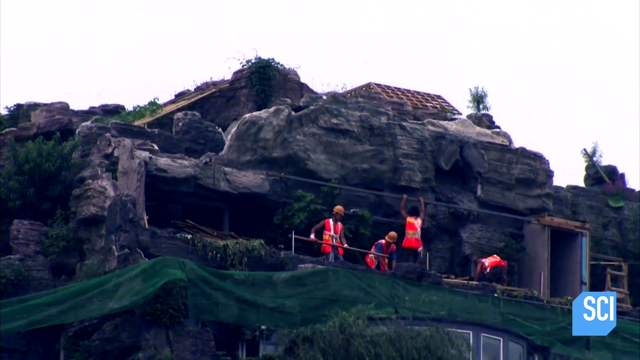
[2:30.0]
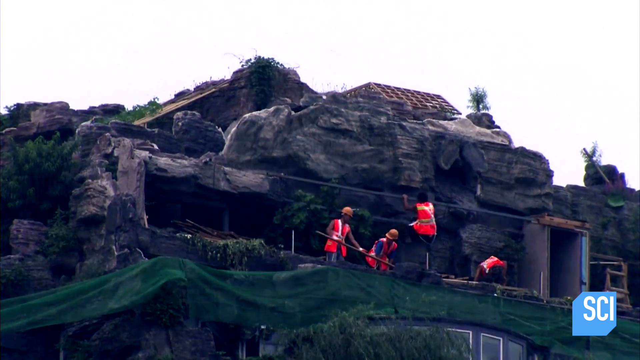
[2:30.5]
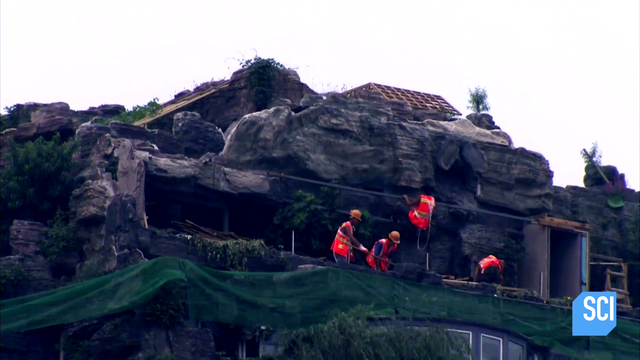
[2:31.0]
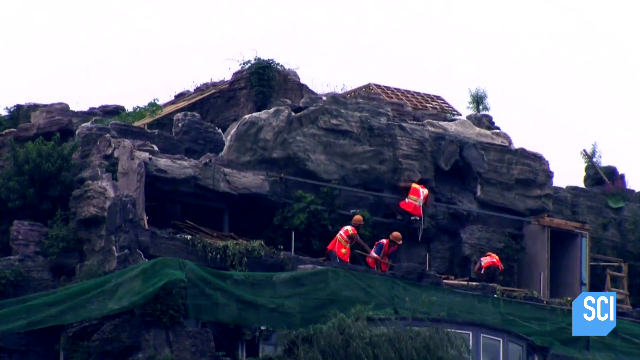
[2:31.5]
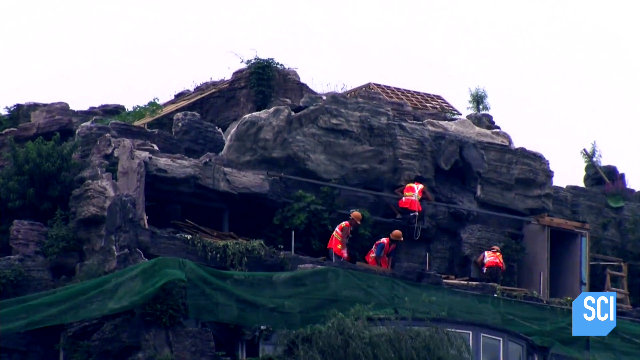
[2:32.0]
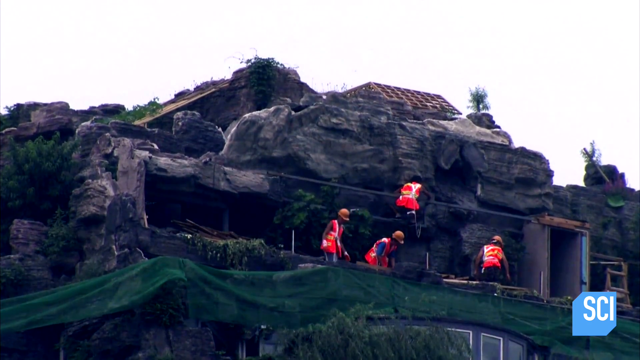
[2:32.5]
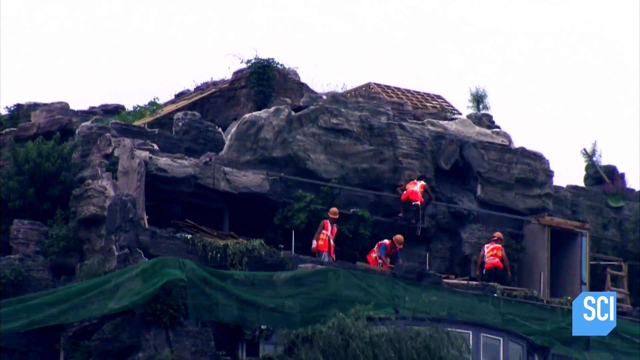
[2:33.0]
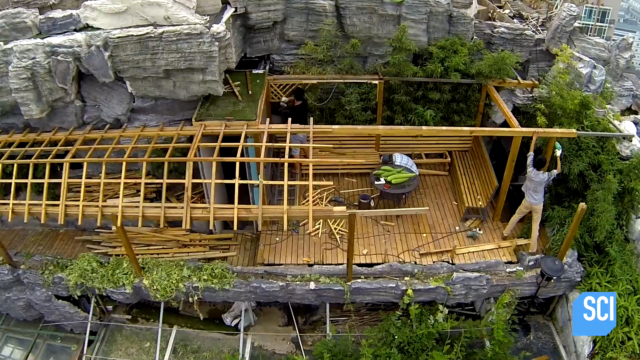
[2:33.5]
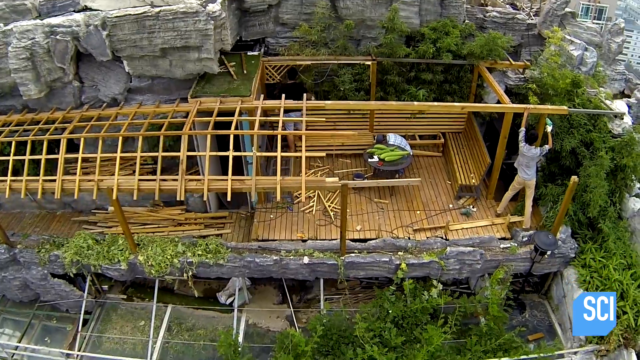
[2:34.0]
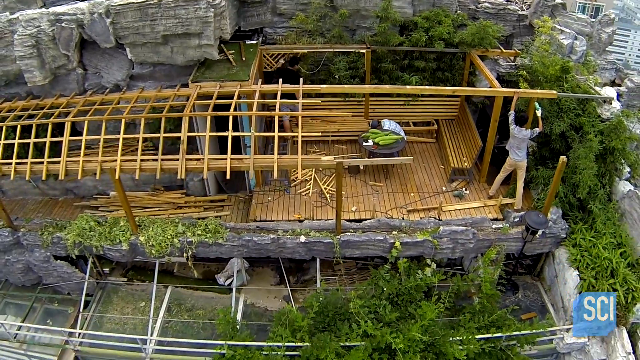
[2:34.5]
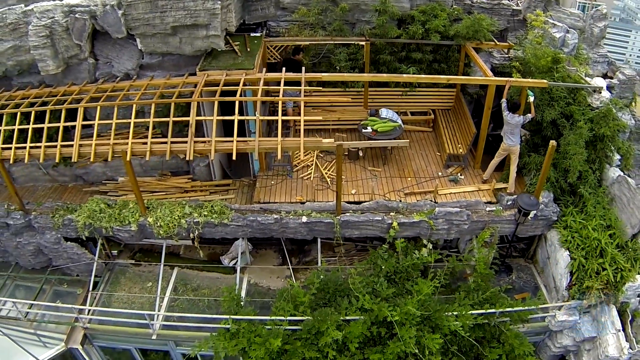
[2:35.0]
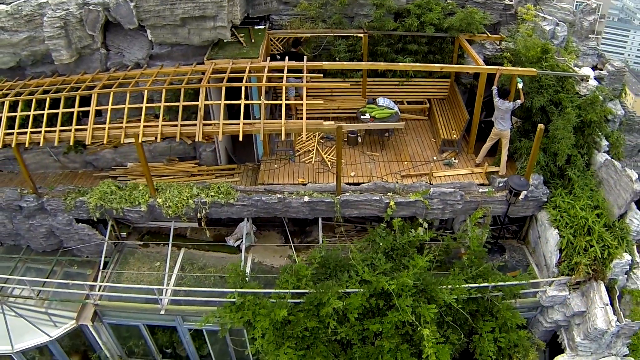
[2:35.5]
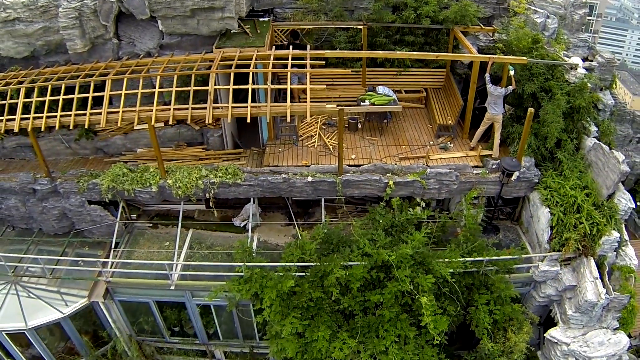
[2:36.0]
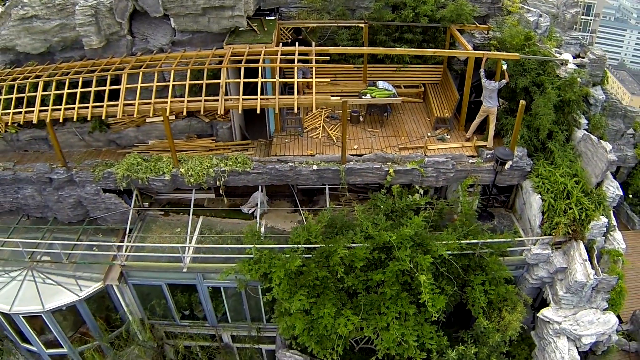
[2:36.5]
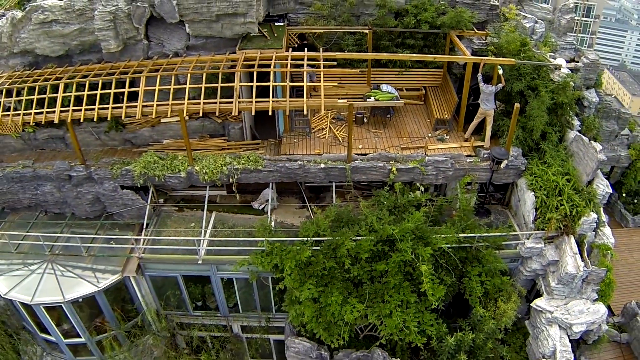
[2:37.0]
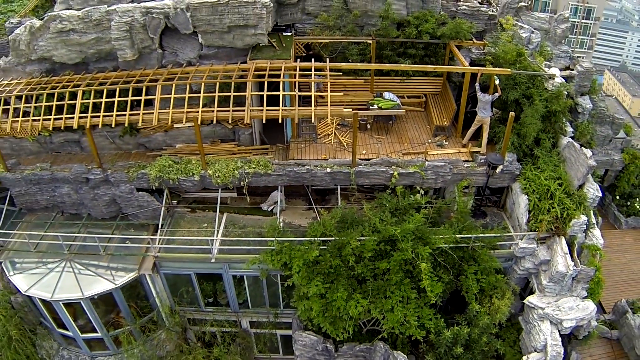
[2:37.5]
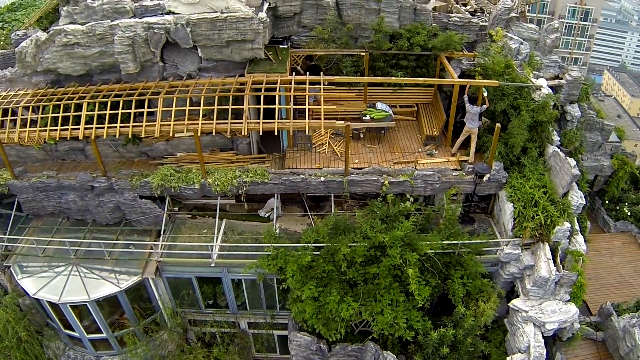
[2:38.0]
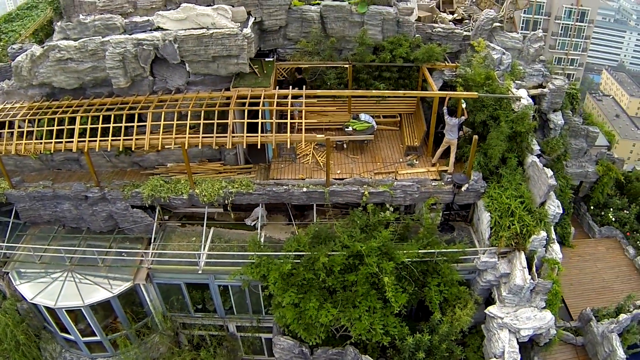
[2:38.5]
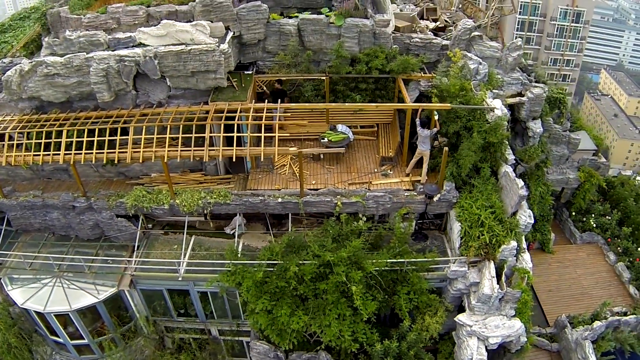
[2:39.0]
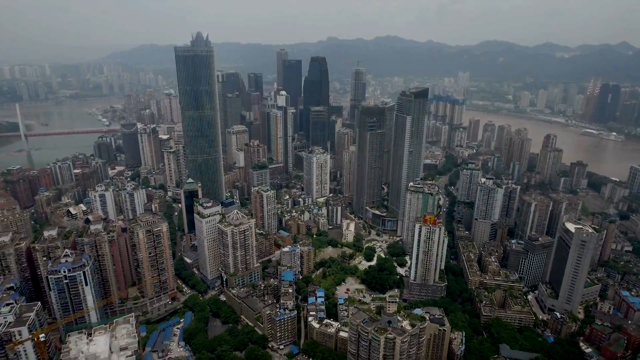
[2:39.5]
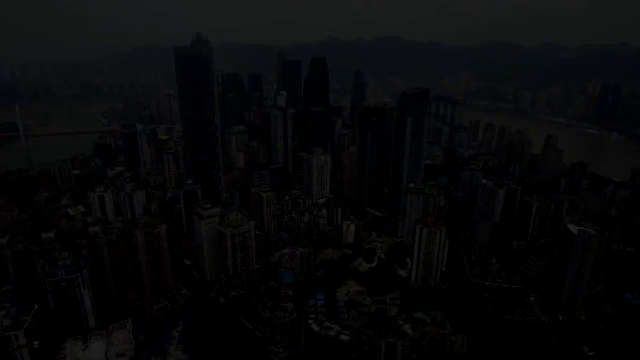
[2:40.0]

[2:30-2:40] Another drone view shows workmen in orange vests working on the rock face, one of them climbing up it. Some tarps are down, green tarps or green artificial turf. In another view they put up golden rails that look like they are bamboo around a seating area tucked back into the rocks. There are lots of trees up there already. The drone then backs away, giving a distant view of the city, the other apartment buildings and Beijing.